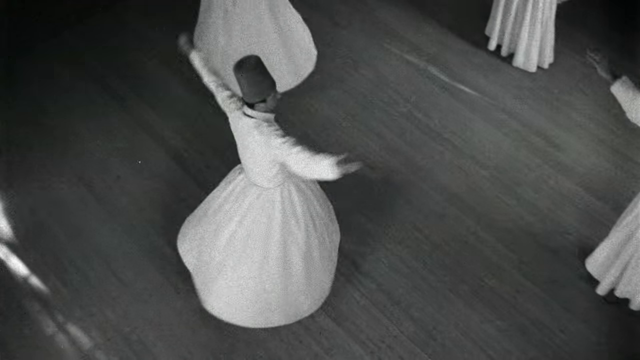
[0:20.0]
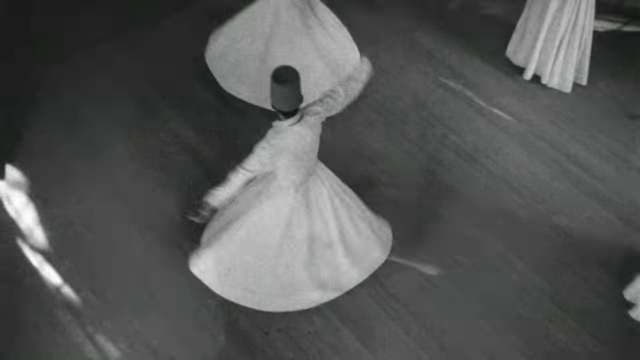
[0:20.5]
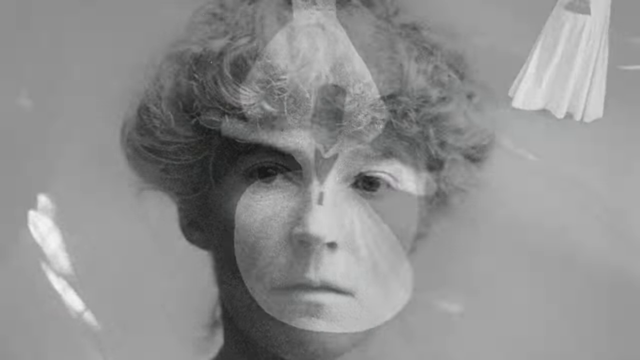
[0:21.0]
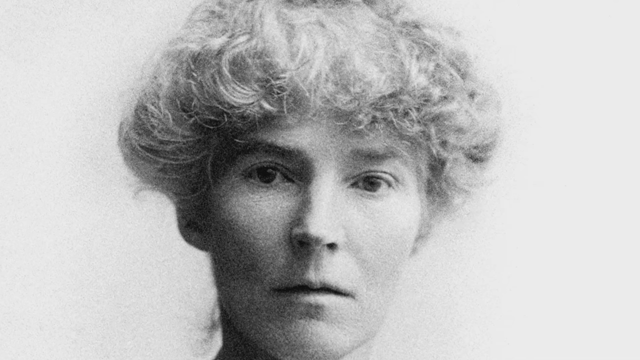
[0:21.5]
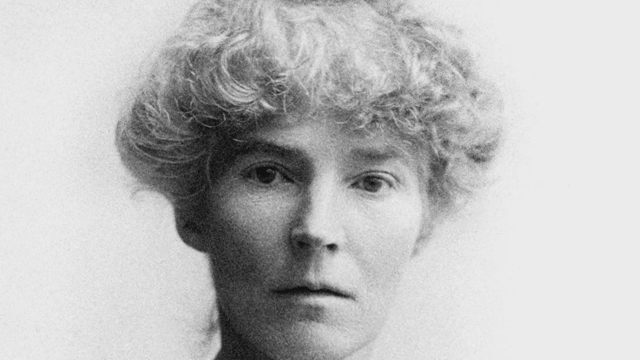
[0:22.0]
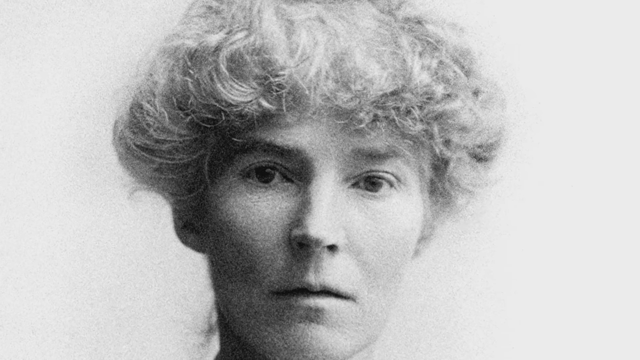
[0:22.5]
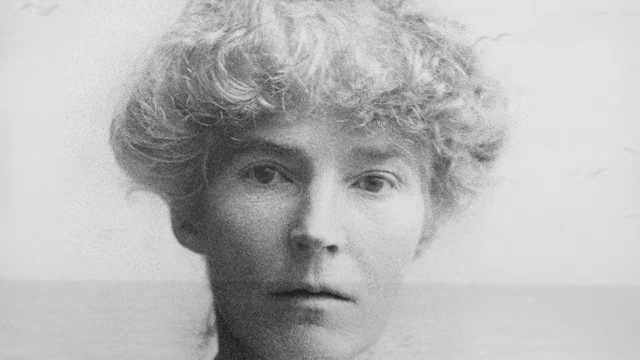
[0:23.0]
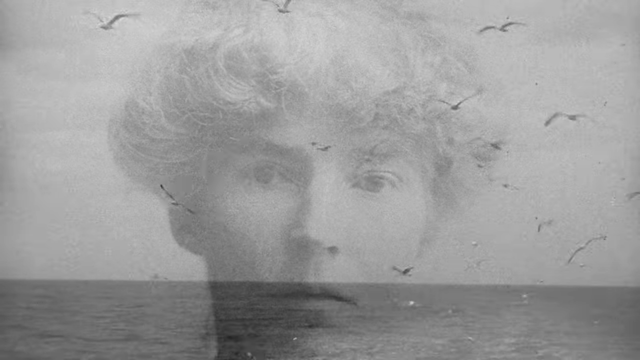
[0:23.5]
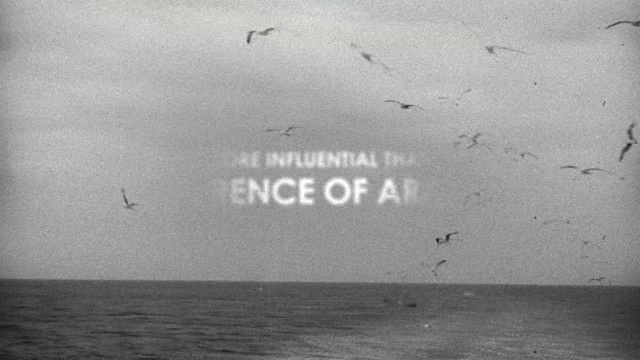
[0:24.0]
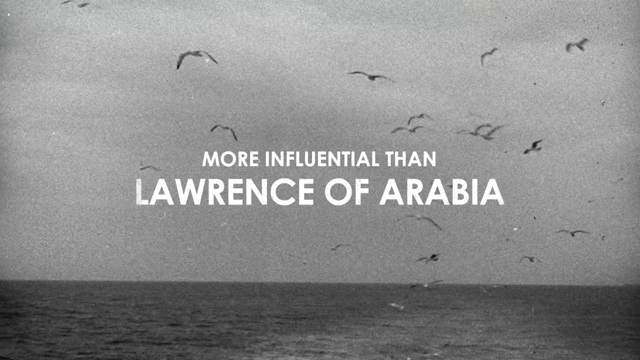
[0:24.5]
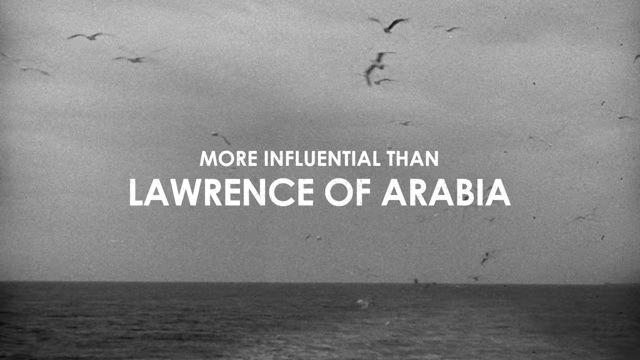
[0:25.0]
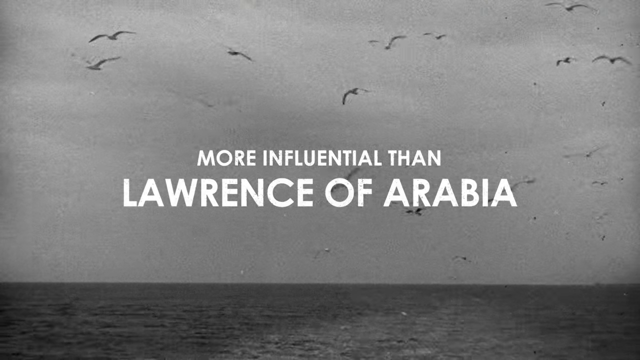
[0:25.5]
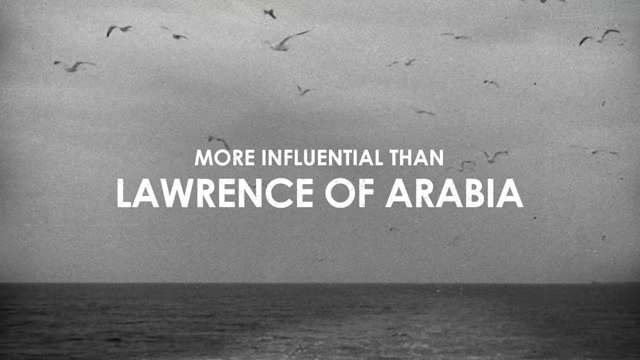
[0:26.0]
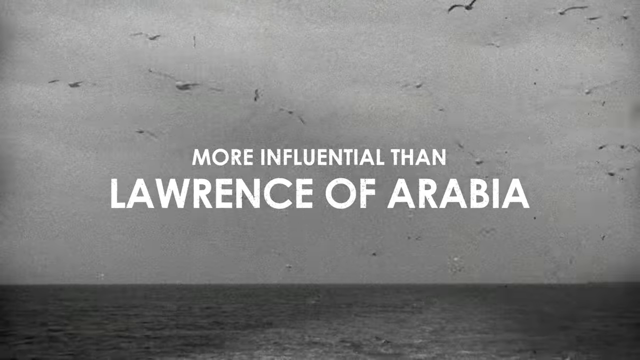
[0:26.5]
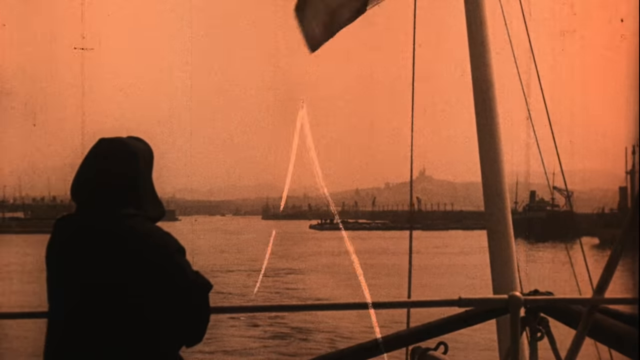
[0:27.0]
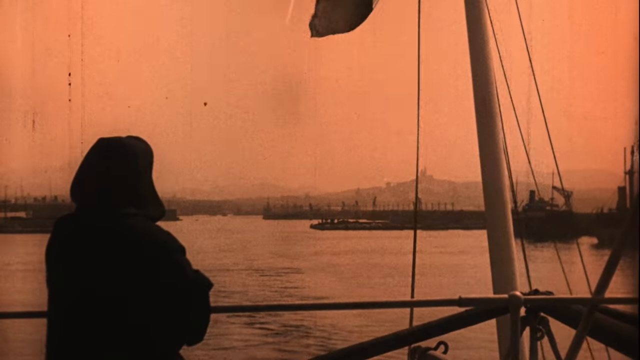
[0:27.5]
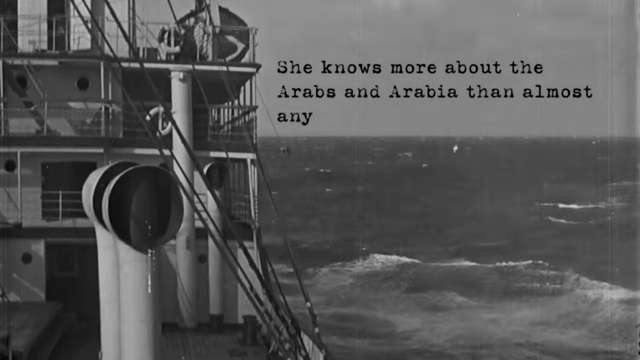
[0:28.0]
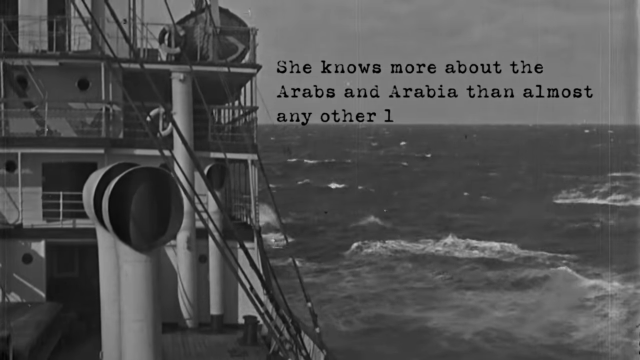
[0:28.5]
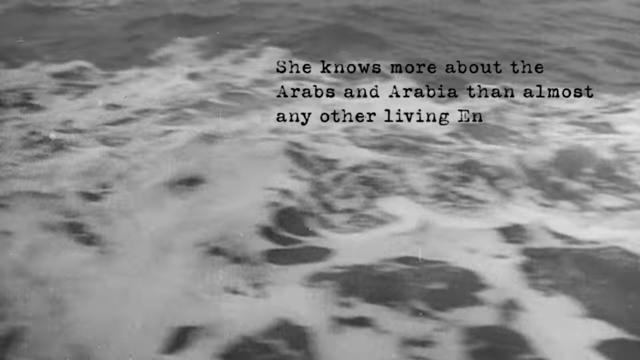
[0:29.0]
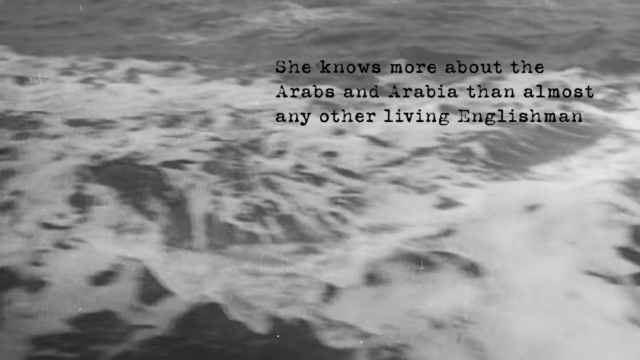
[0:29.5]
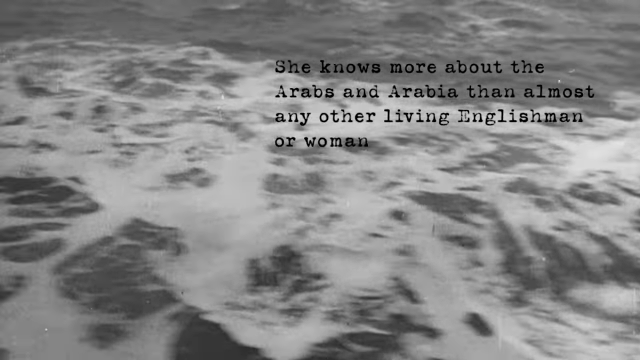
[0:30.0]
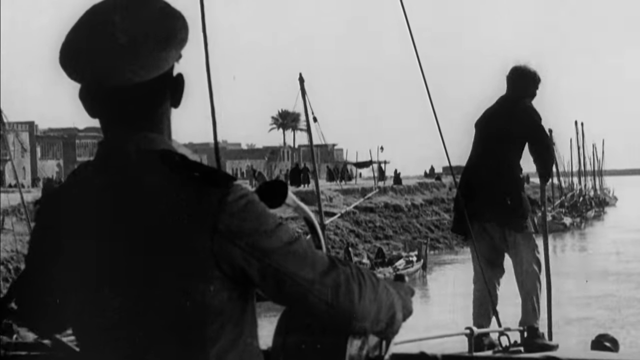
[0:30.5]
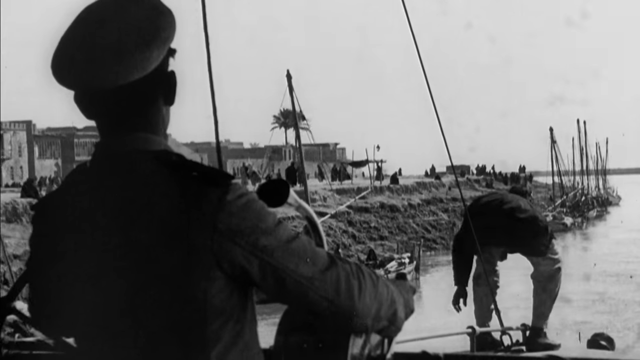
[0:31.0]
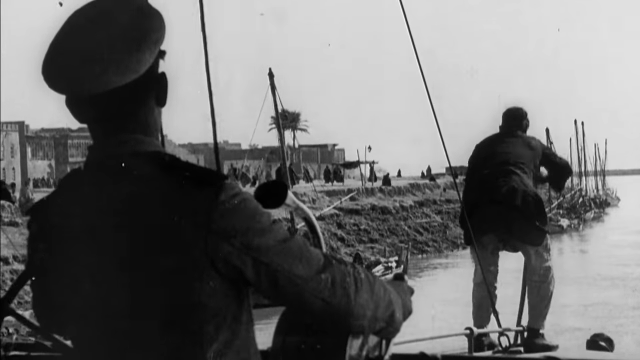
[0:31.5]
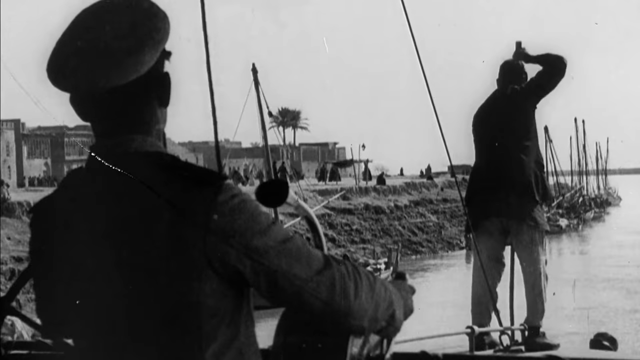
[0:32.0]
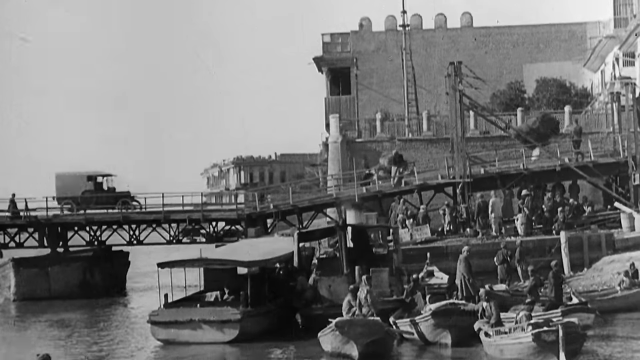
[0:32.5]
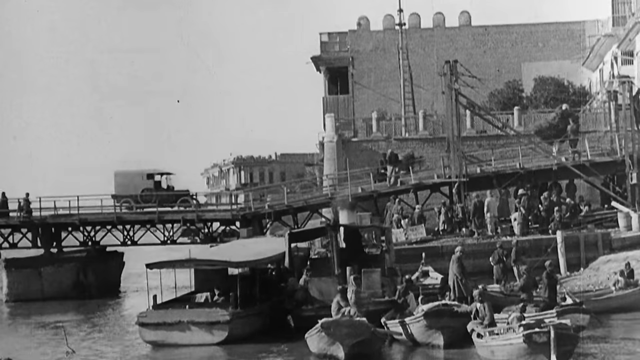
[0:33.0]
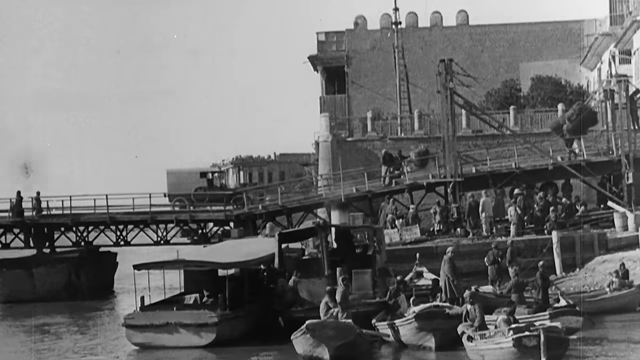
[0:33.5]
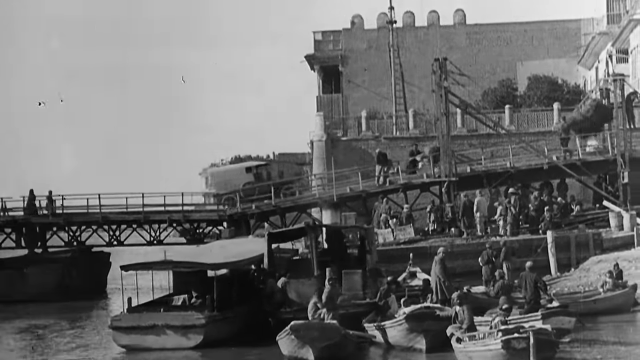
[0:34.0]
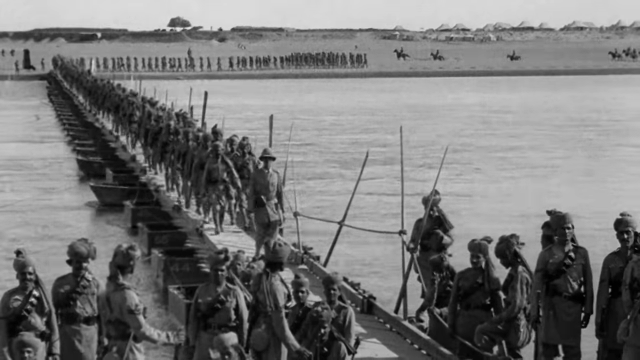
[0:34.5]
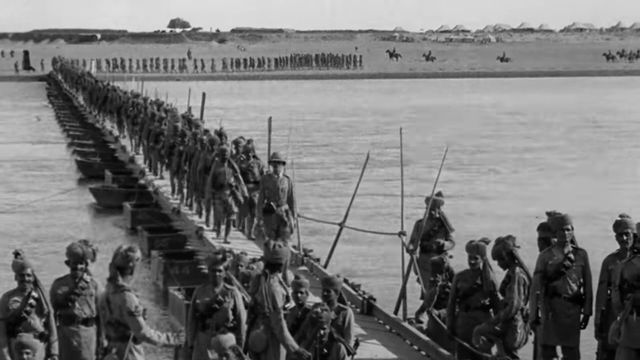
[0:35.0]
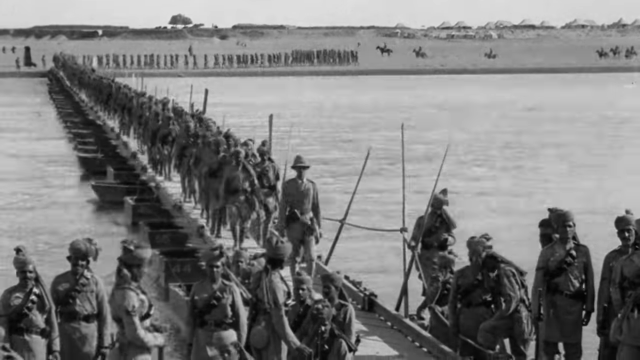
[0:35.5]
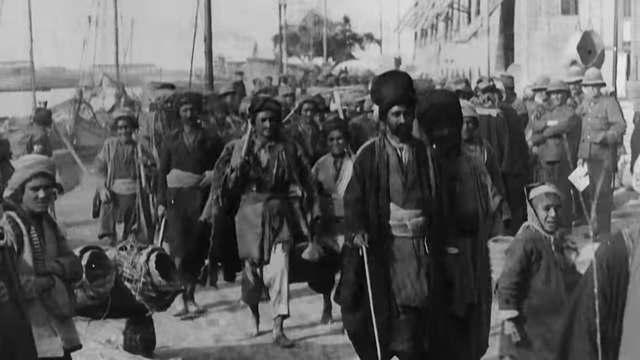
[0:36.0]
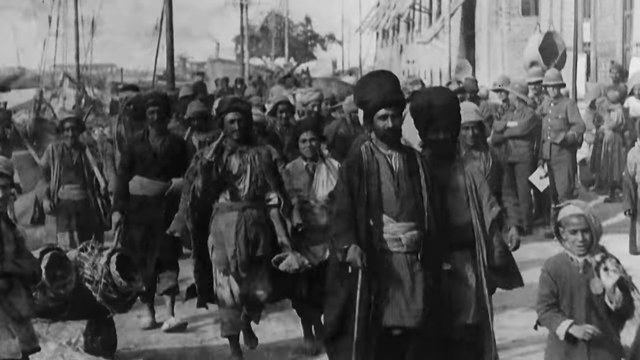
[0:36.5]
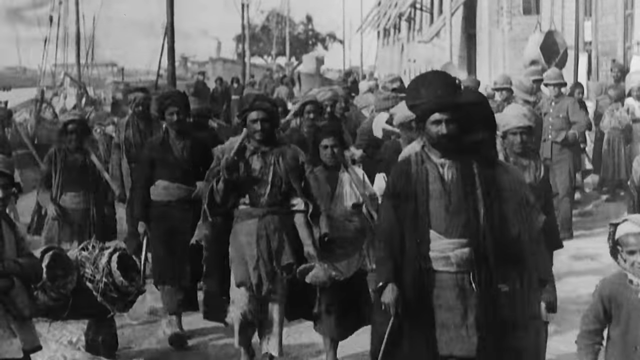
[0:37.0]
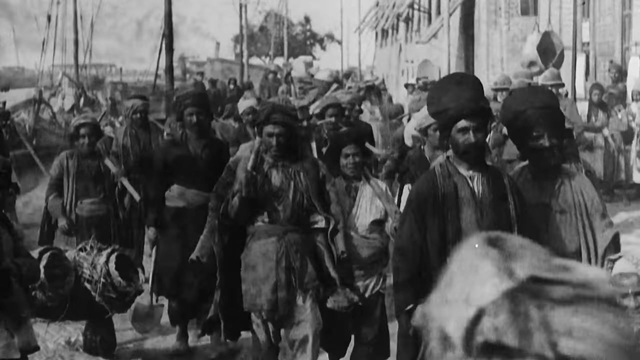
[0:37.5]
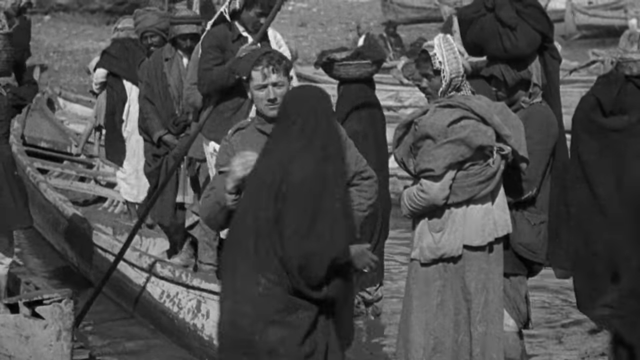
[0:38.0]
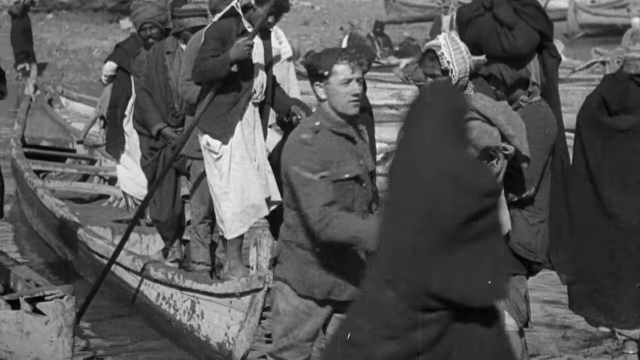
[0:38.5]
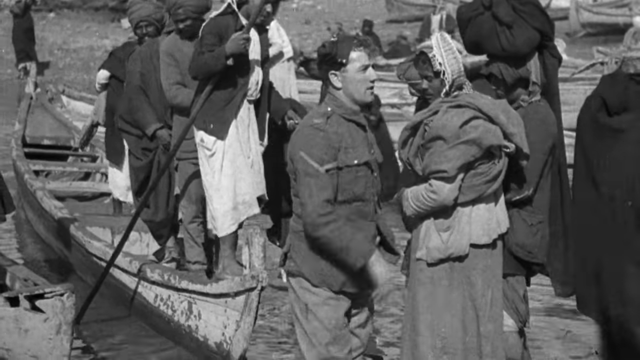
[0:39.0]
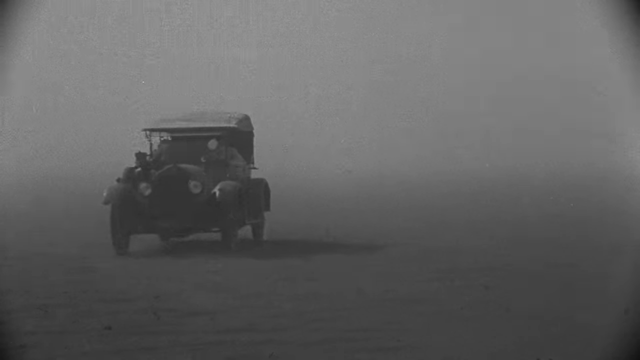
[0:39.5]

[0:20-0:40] An overhead view shows whirling dervish dancers: two in the middle, with the bottom garments of two more visible off to the side. Next is a black-and-white photograph of a woman with scruffy, wiry blonde hair looking into the camera with a very stern look. The scene changes to the sky above a body of water, where countless seagulls fly around, and text appears over the screen: "more influential than Lawrence of Arabia." A waterway follows, with ships in the distance and a mountain range; the view is from a ship, with the silhouette of a person looking out. Then a close-up shot shows a ship at sea, its superstructure visible, along with the horizon, the sky, and fairly rough water. Next, construction is taking place in the desert, where a person who appears to be in charge seems to be instructing the workers. Finally, a soldier appears to be rude, shoving people along.